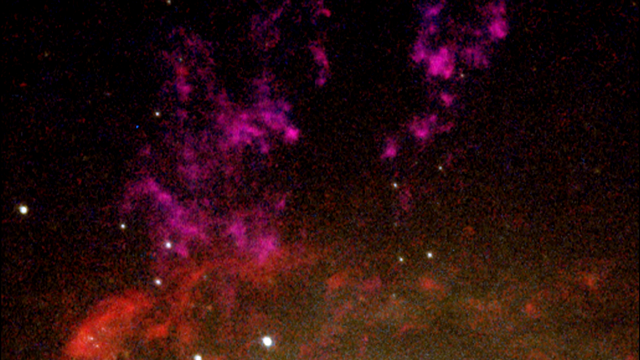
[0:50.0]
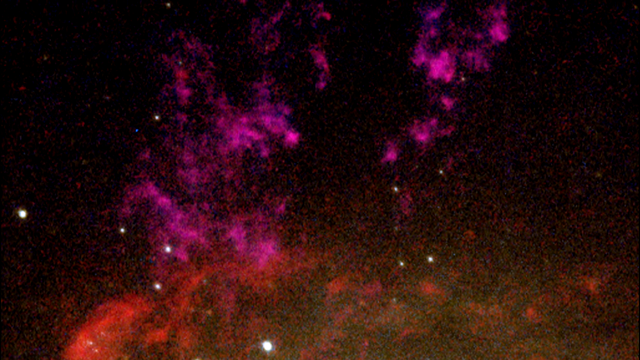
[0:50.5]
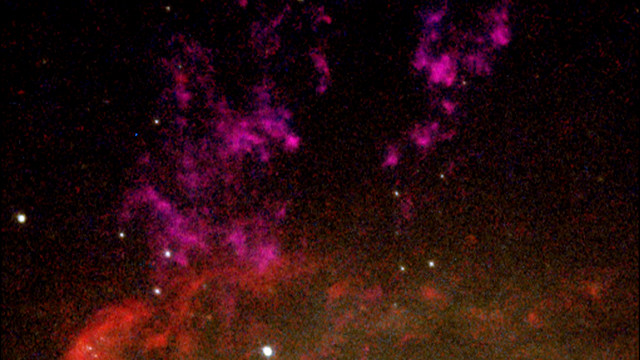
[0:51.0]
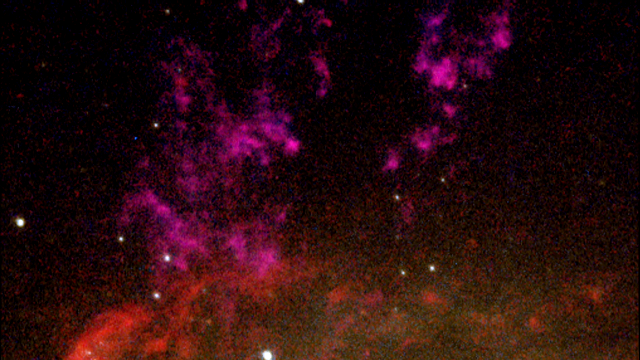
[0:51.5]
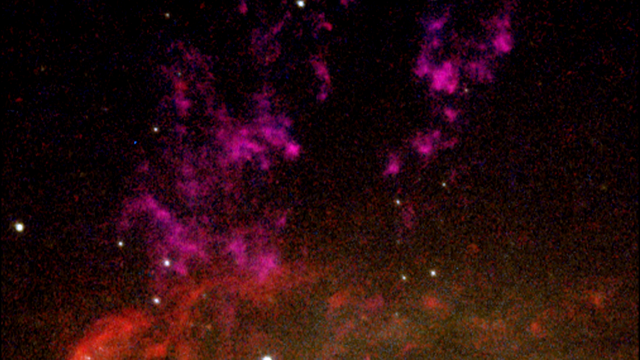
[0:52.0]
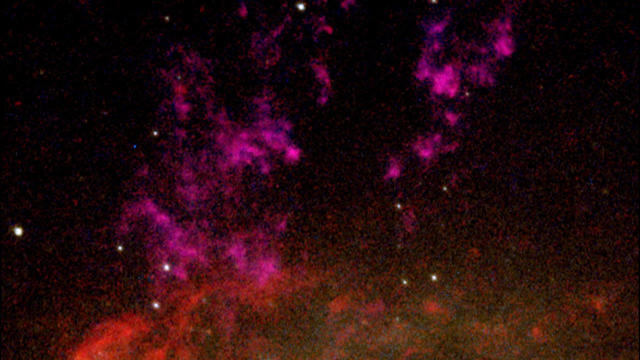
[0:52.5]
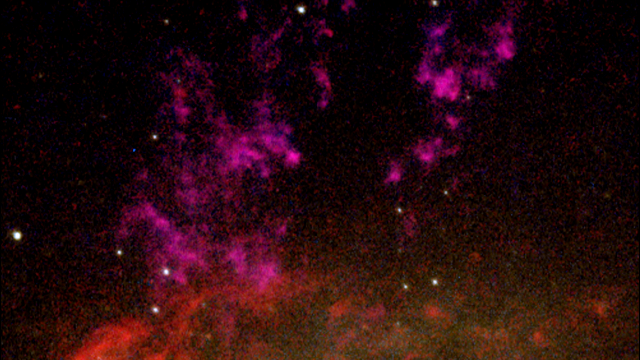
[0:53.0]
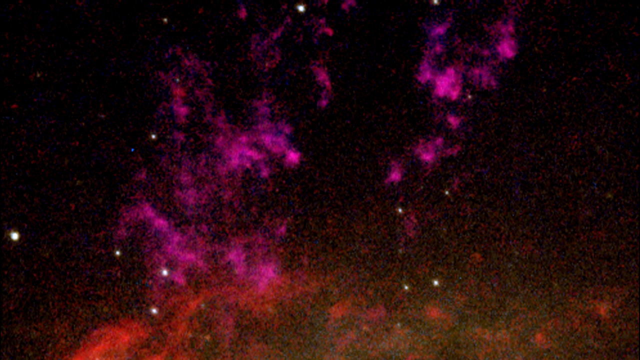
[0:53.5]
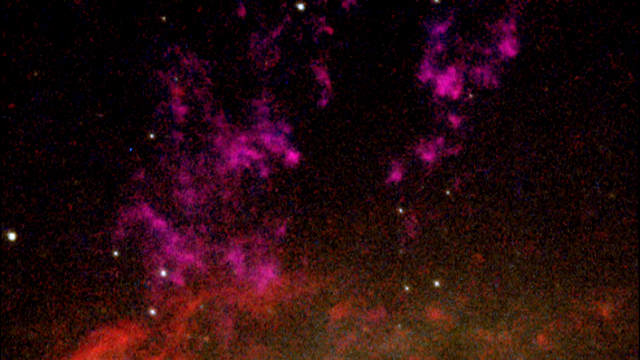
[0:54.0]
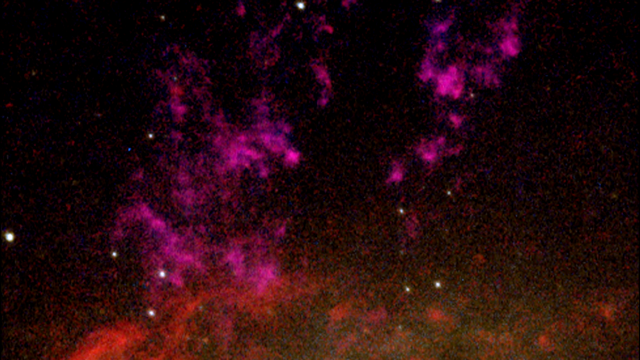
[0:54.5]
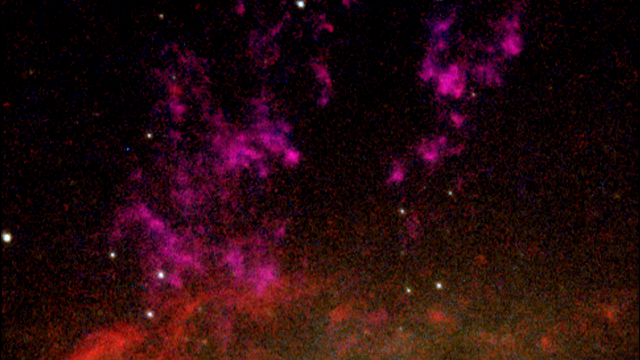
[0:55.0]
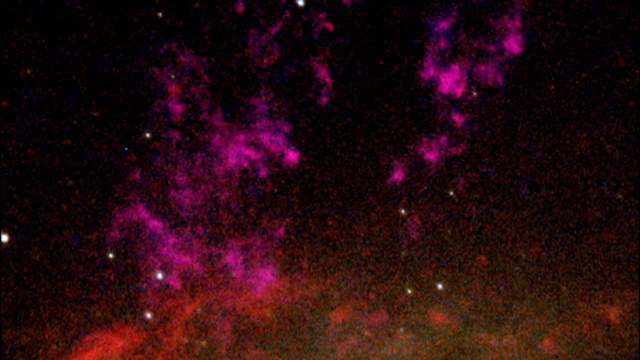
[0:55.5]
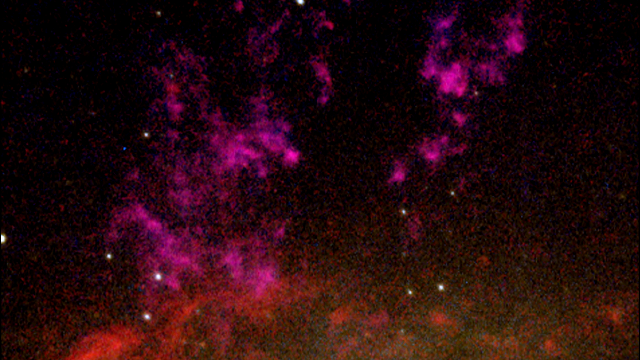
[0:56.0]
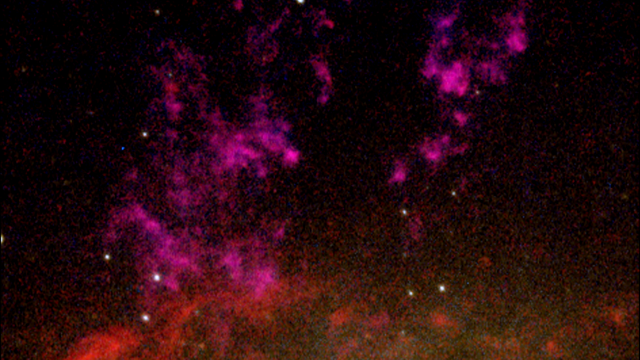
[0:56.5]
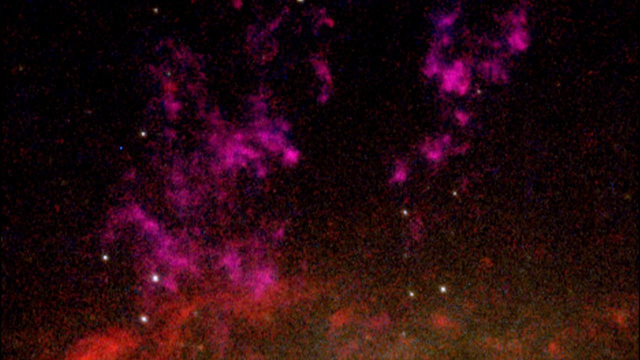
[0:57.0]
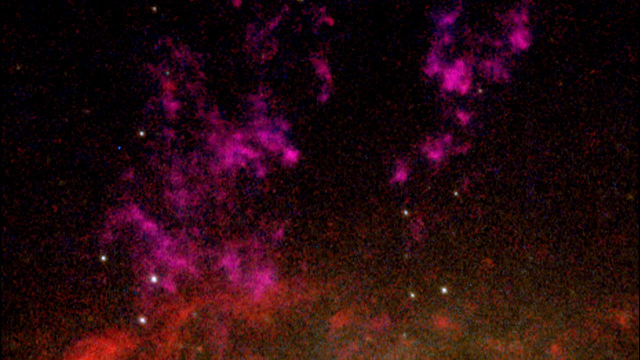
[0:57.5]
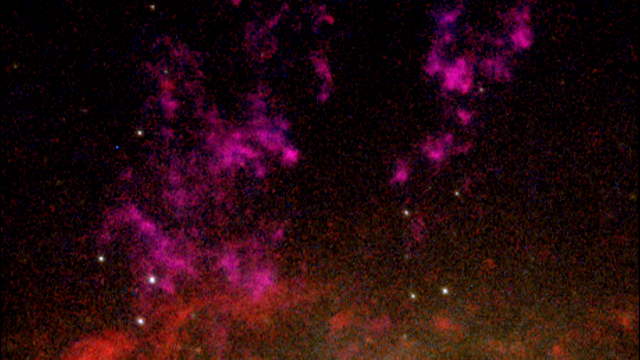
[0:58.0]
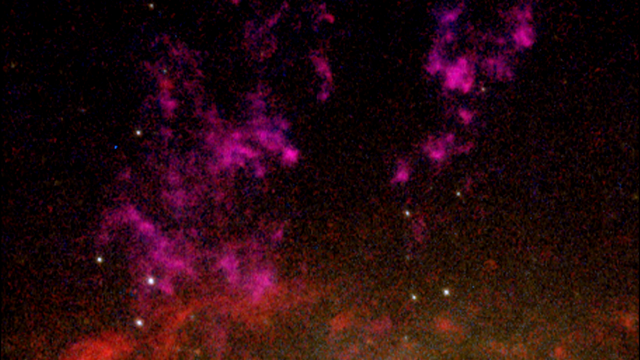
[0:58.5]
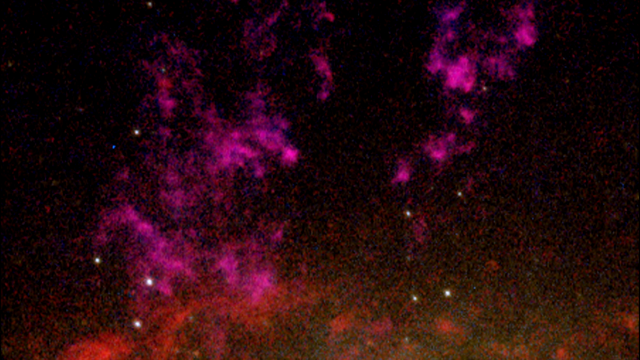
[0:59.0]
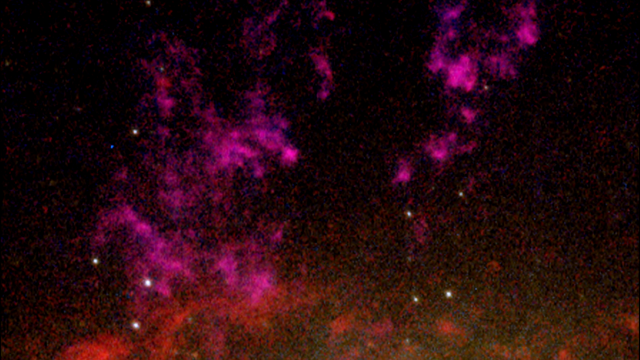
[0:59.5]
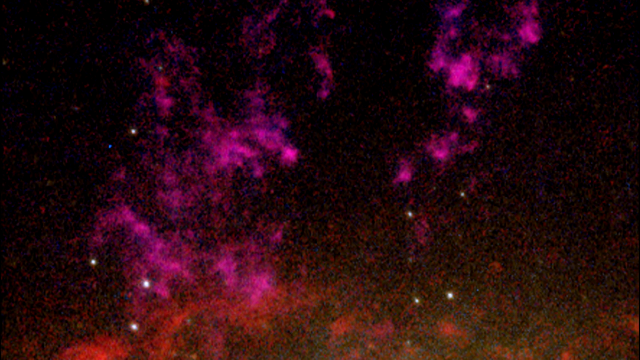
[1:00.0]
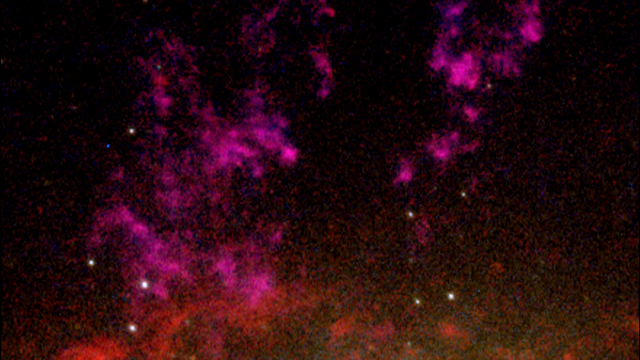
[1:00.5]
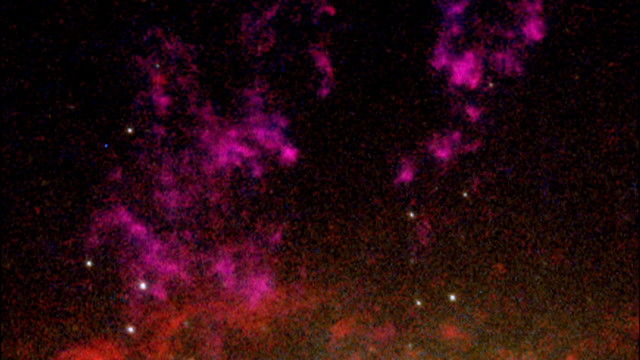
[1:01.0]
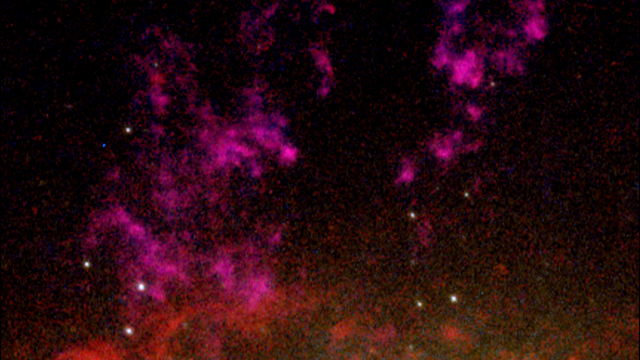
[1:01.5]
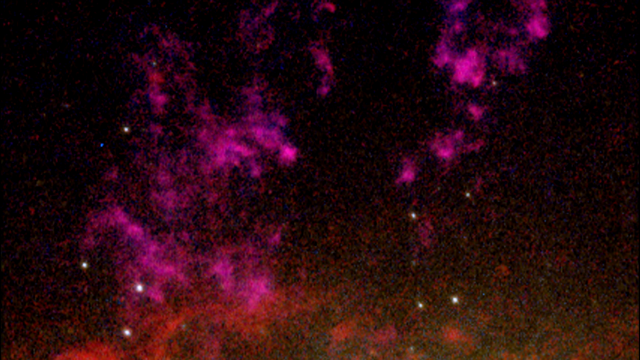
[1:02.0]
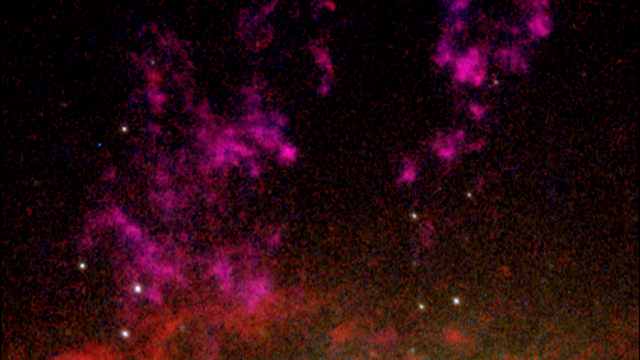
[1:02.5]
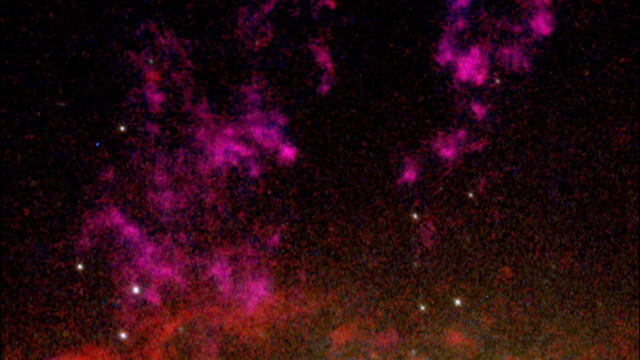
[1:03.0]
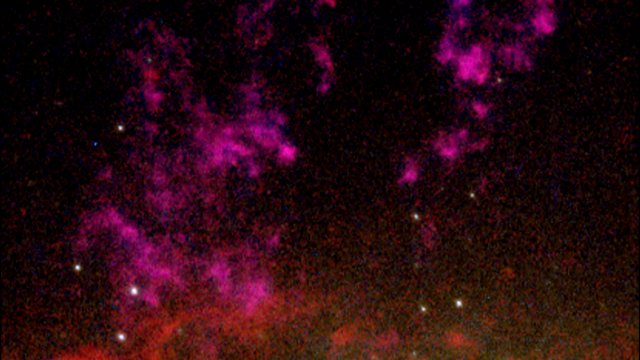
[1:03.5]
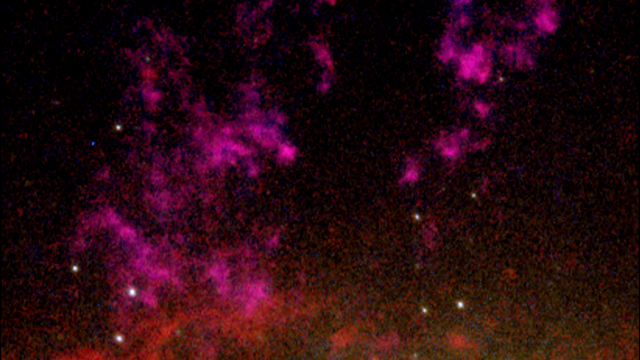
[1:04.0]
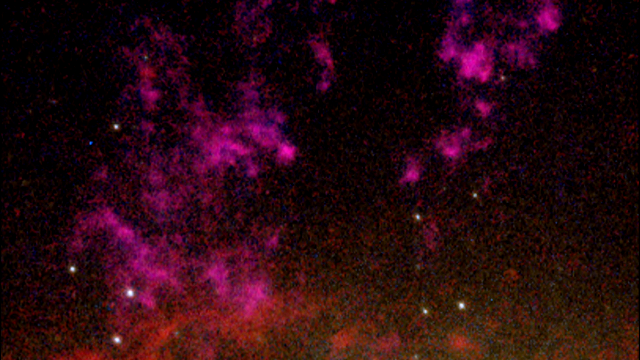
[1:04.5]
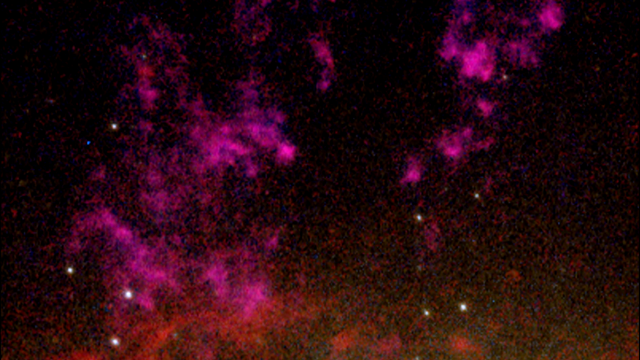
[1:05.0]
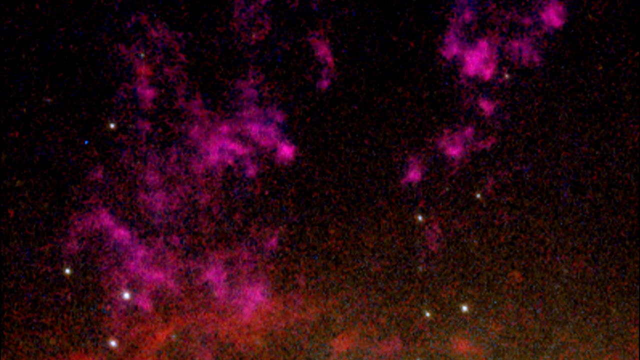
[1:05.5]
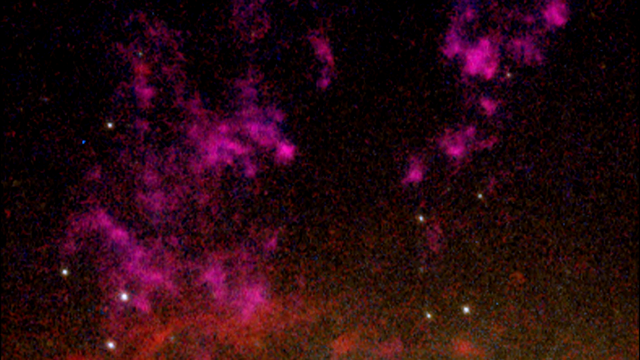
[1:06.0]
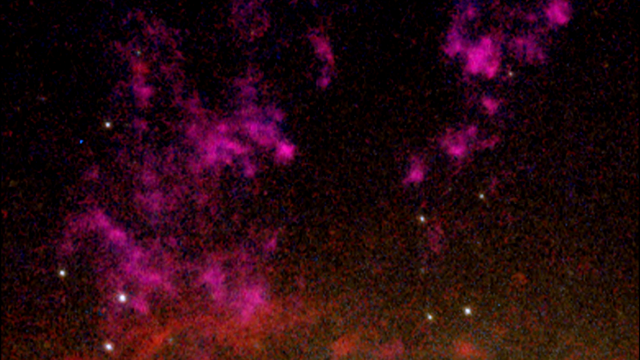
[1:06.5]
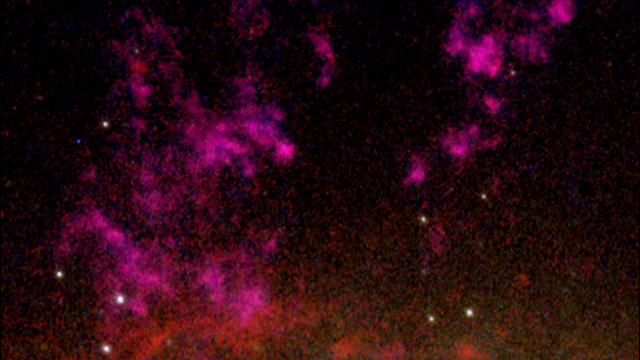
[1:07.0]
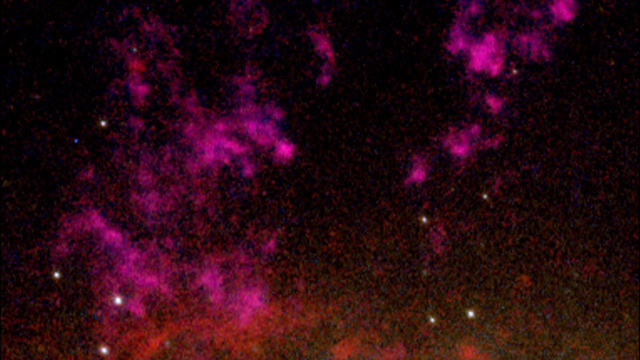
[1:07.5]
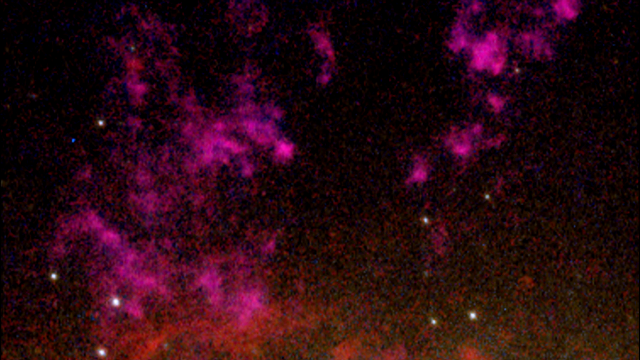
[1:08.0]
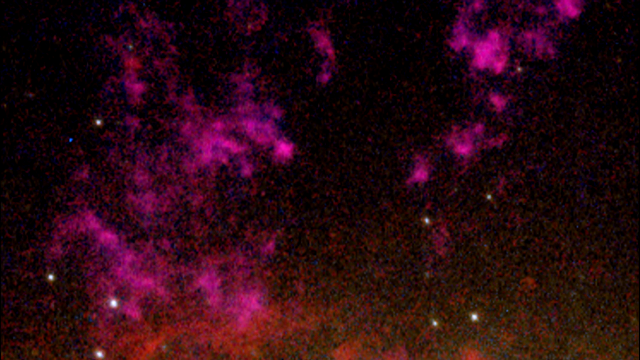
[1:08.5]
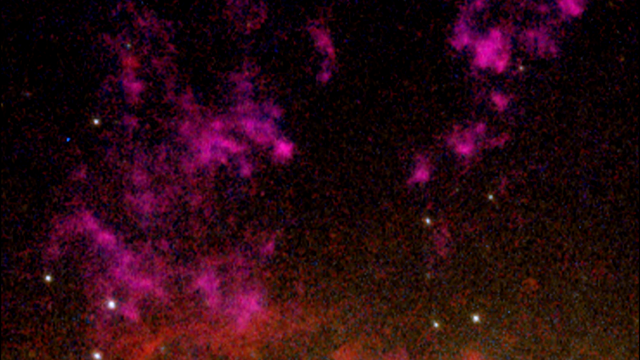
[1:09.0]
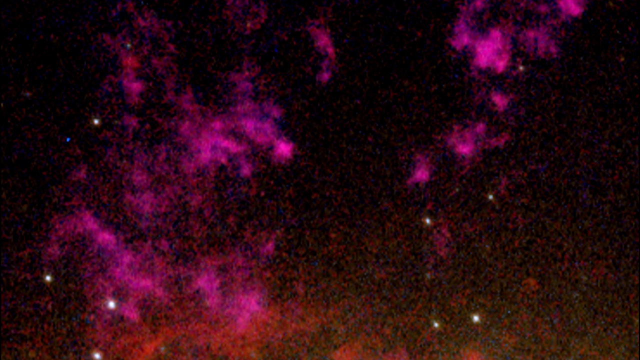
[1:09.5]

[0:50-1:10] The video zooms in and focuses on the pink part firing out of the rest of the cloud. The pink contrasts with the red, yellows and orange in the rest of the cloud shape. Little bright stars or dots are within the frame. Behind the pink flames is dead black, which makes this part of the image stand out. The vivid colours make it look as though it's paint, though it is likely some elements from a star or meteor. There seem to be lots of things happening, yet the details remain quite vague and unclear.